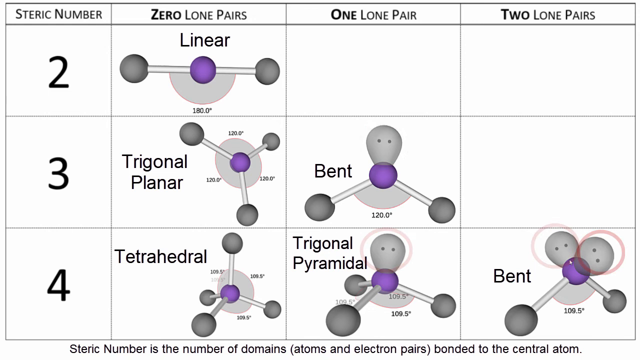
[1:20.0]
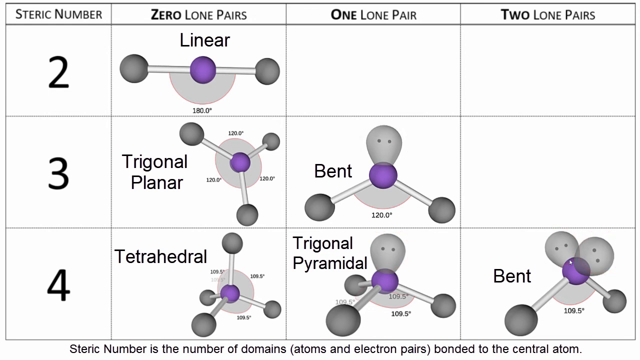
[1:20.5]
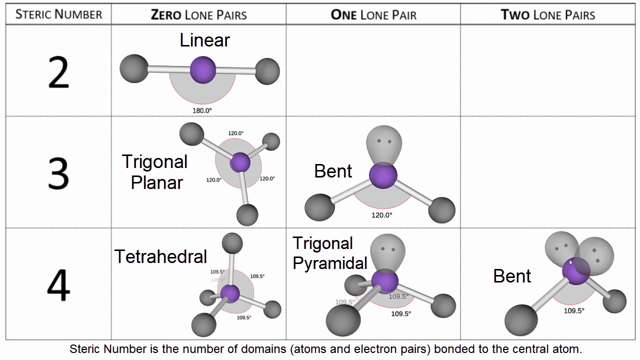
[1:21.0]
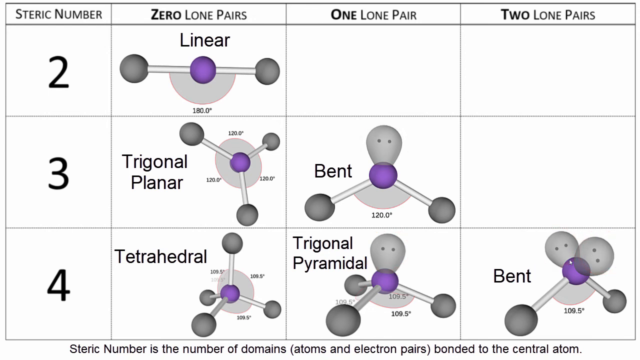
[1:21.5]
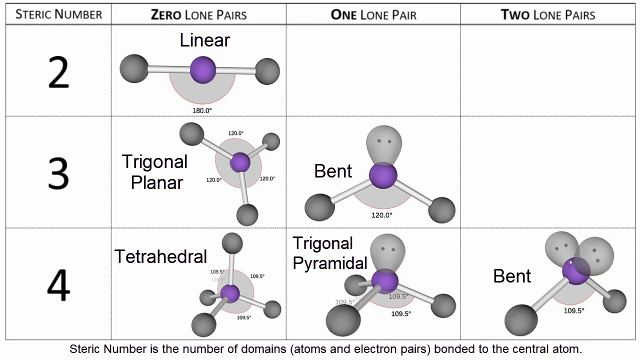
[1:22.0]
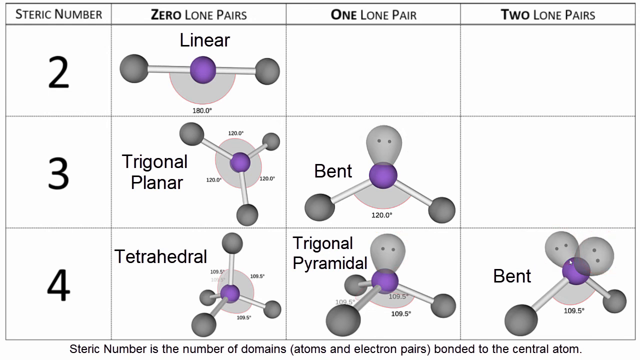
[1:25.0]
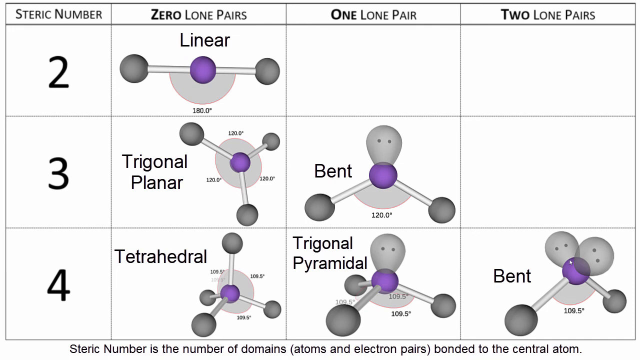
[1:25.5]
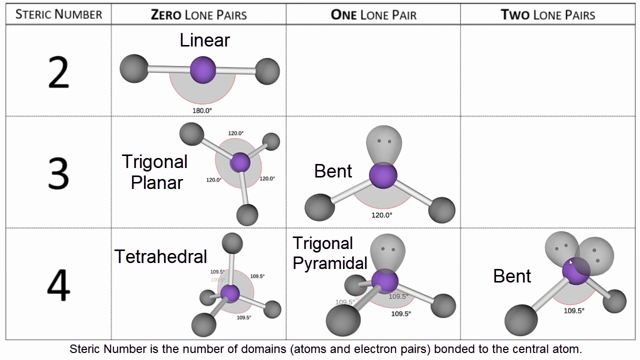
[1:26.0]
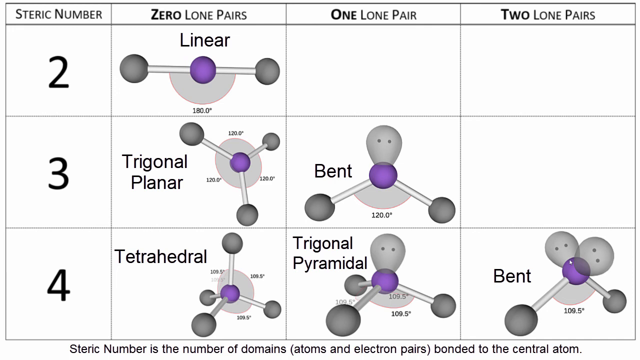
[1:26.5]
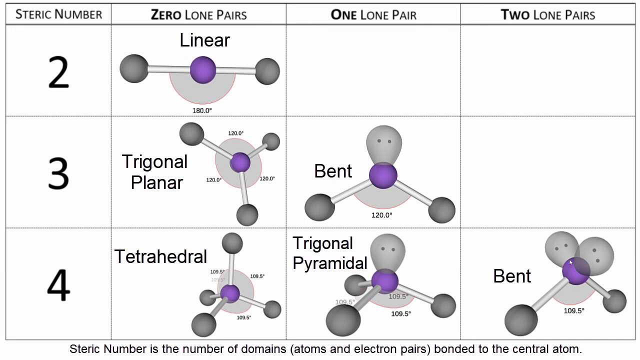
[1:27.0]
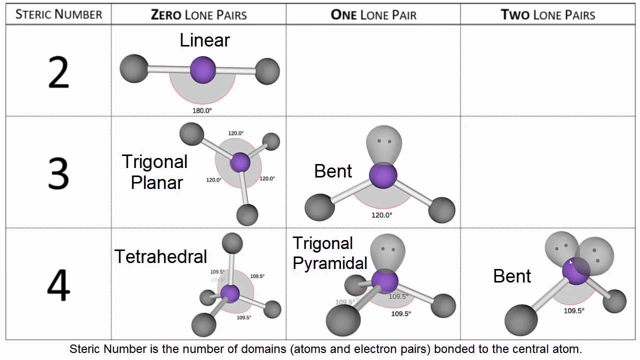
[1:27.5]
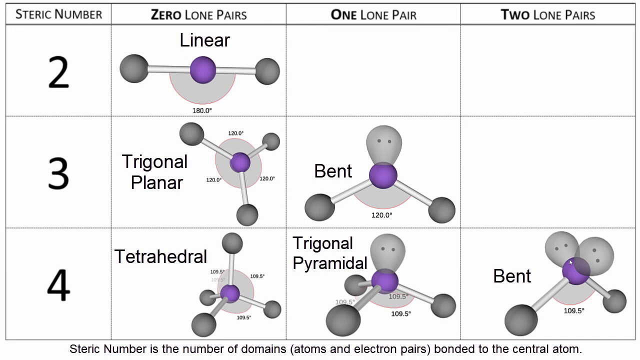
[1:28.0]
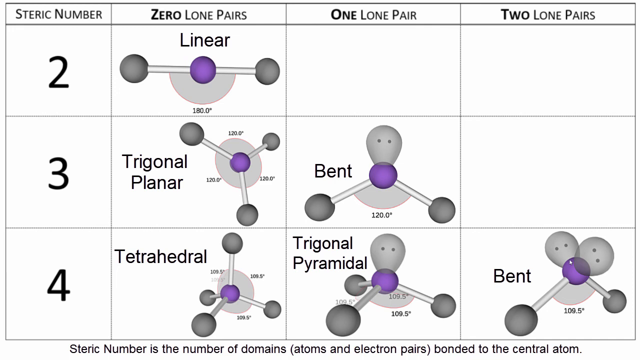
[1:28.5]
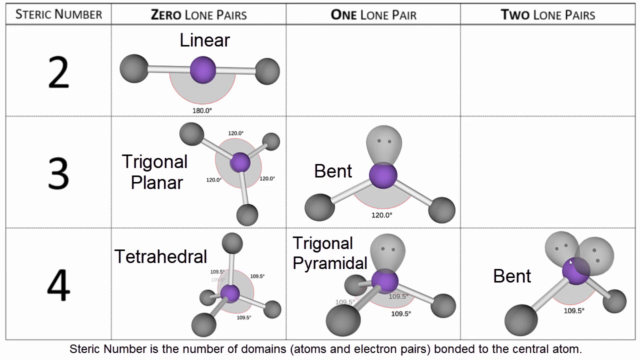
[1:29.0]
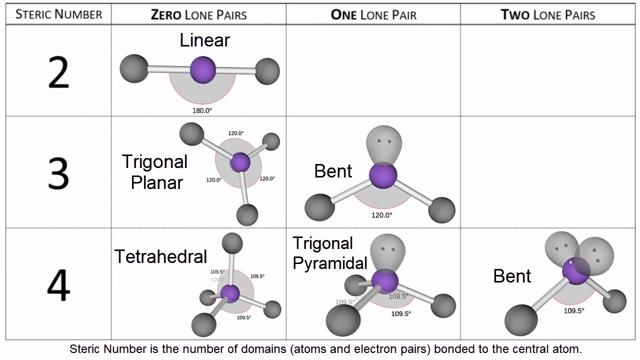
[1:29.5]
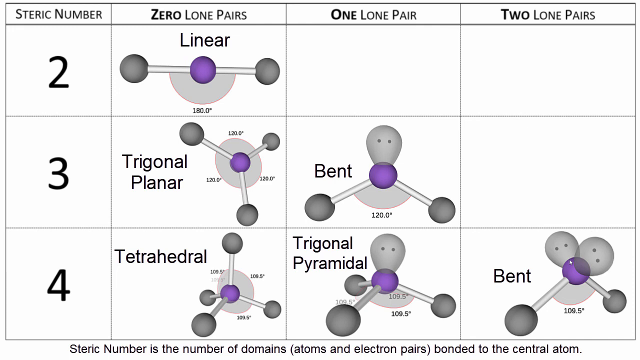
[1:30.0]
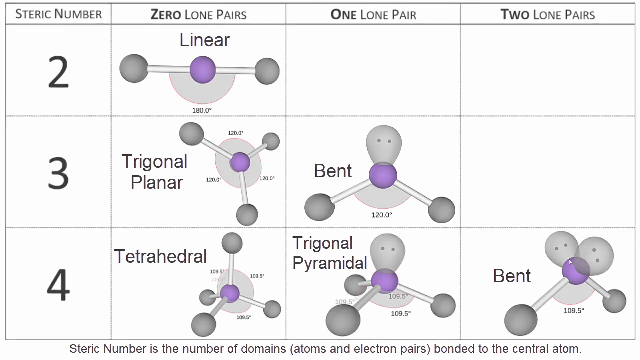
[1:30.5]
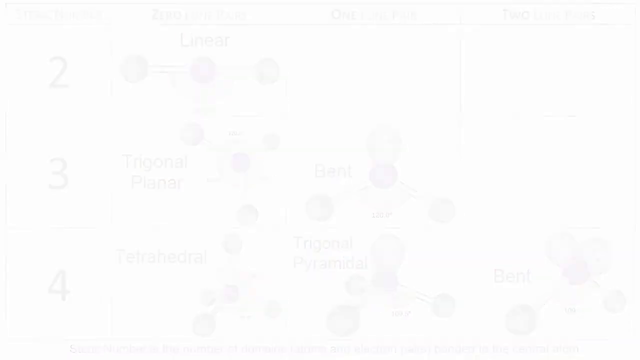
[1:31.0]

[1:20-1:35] The same table remains on screen, with nothing highlighted. It has three rows and four columns. From the left, the first column is the steric number: two, three, or four. The second column holds molecules with zero lone pairs, the third molecules with one lone pair, and the fourth molecules with two lone pairs. The first row, steric number two, has only zero lone pairs, forming a linear molecule. The second row, steric number three, has zero lone pairs forming a triangular planar molecule, or one lone pair forming a bent molecule. The third row, steric number four, has three arrangements: zero lone pairs forming a tetrahedral molecule, one lone pair forming a triagonal pyramidal molecule, and two lone pairs forming a bent molecule. The table is unchanged from the beginning. Finally, the table fades away completely, leaving a plain white screen.